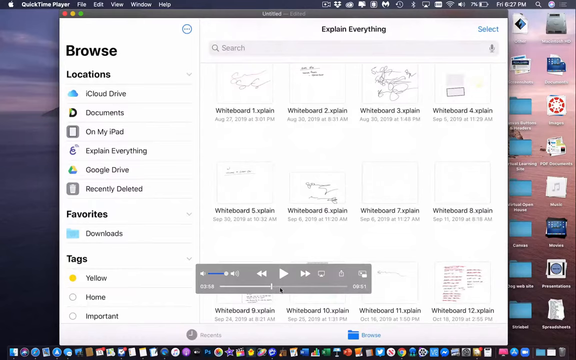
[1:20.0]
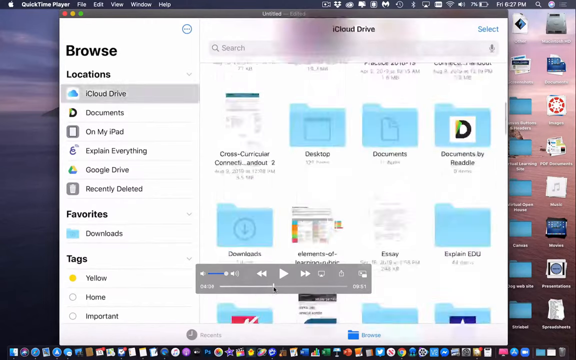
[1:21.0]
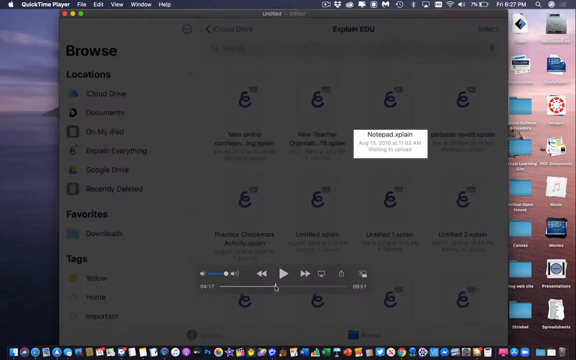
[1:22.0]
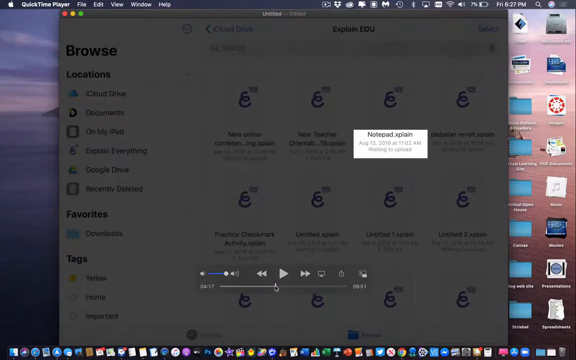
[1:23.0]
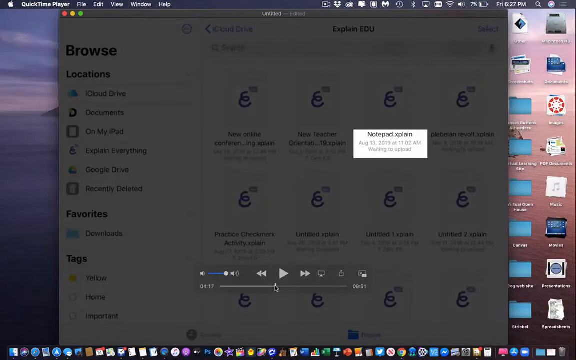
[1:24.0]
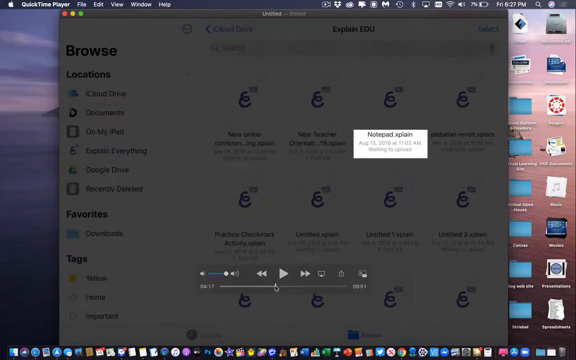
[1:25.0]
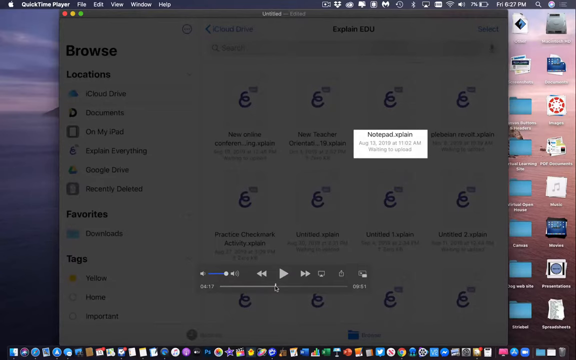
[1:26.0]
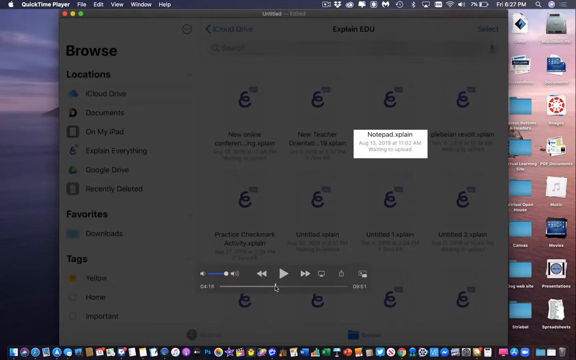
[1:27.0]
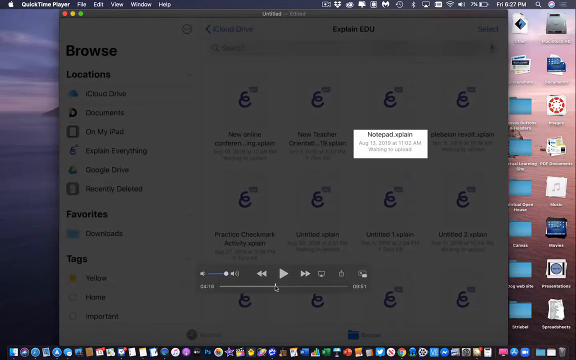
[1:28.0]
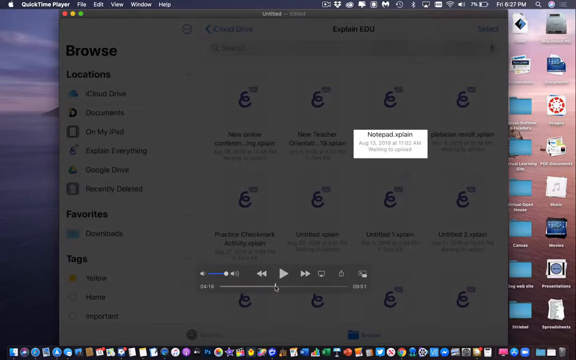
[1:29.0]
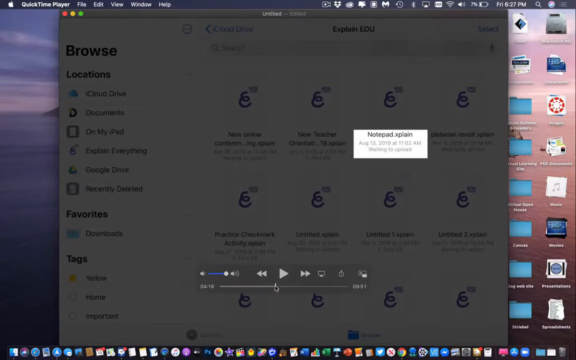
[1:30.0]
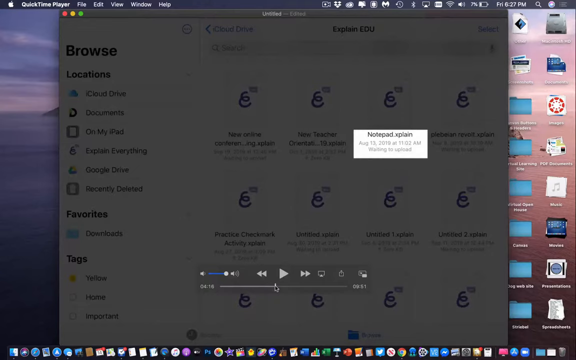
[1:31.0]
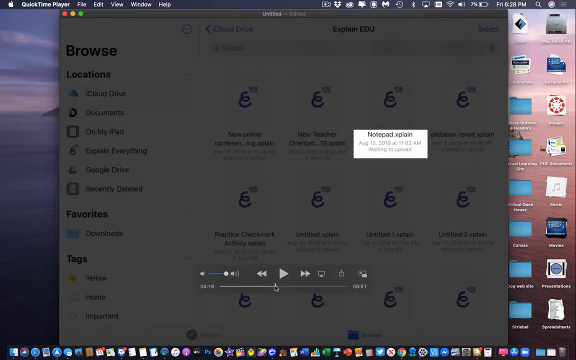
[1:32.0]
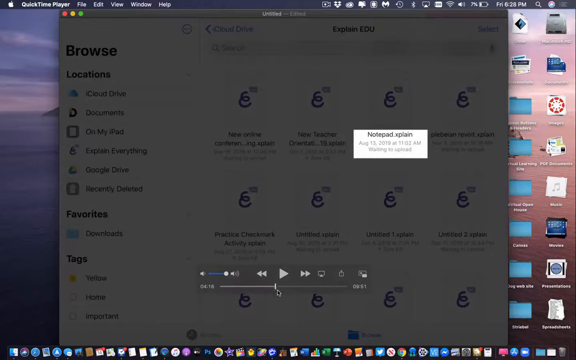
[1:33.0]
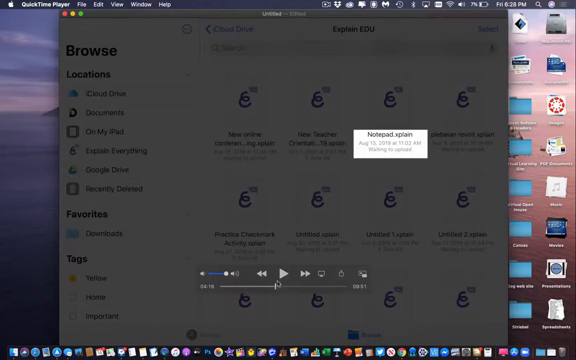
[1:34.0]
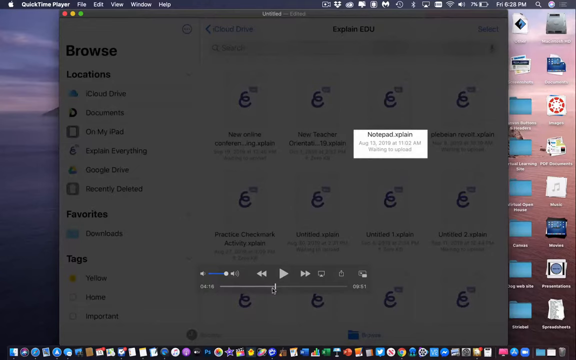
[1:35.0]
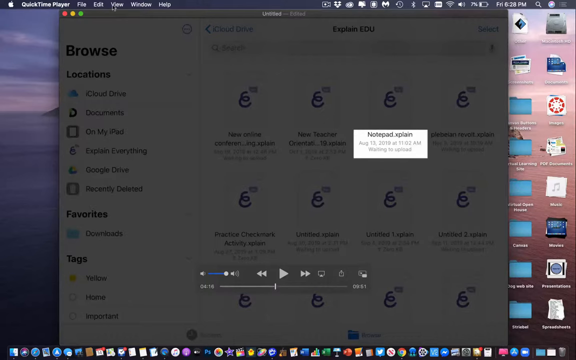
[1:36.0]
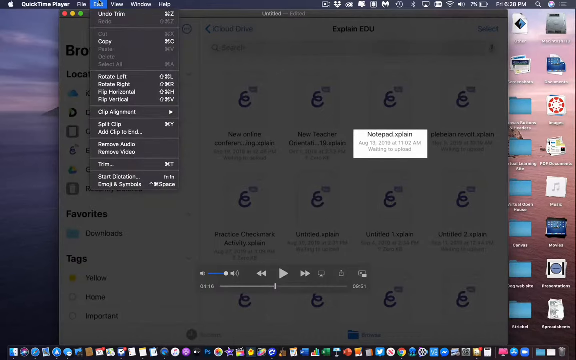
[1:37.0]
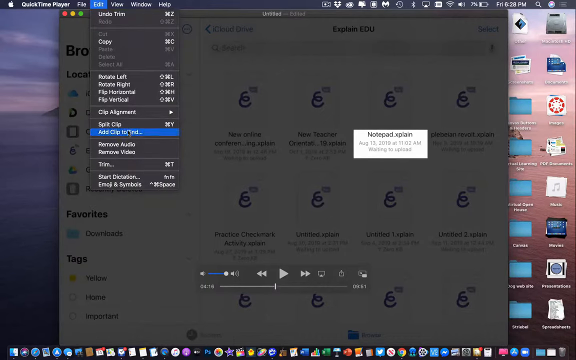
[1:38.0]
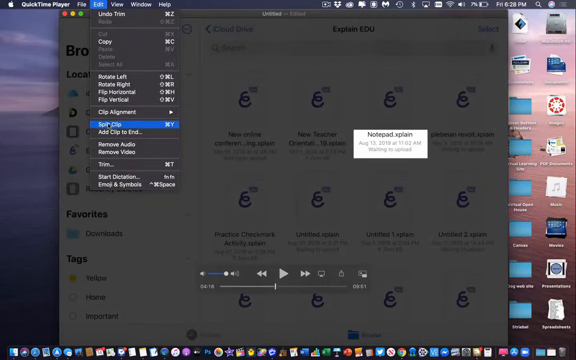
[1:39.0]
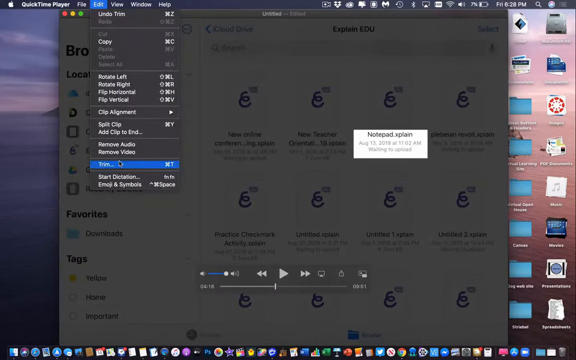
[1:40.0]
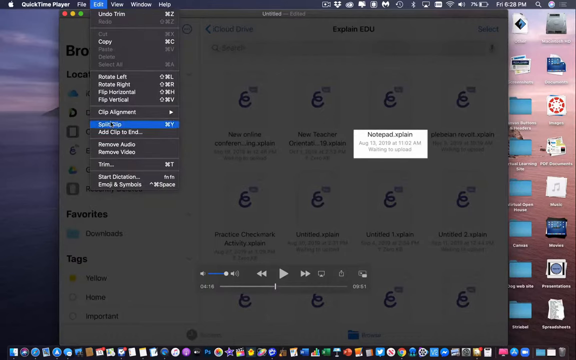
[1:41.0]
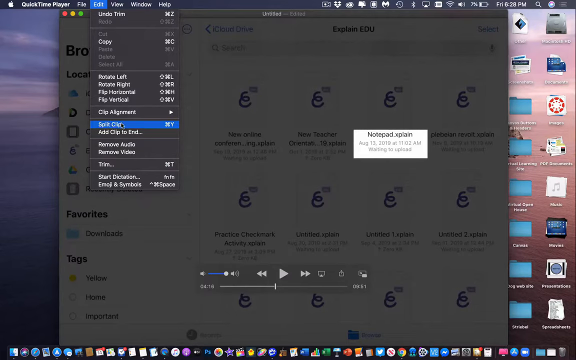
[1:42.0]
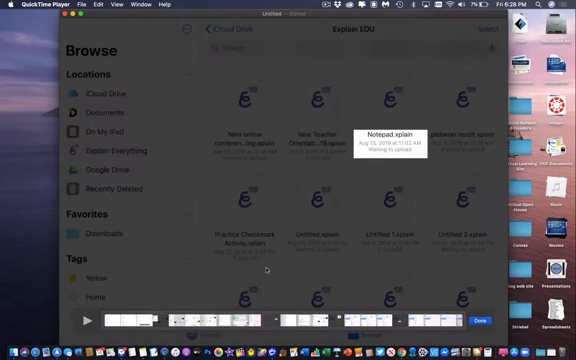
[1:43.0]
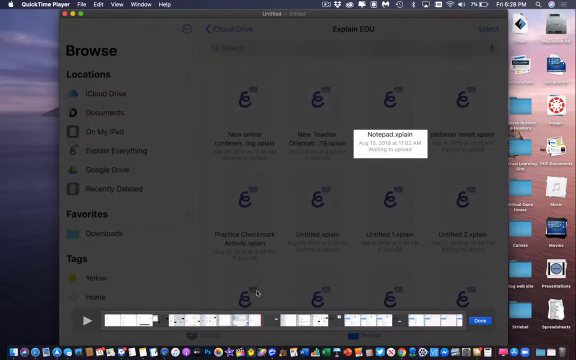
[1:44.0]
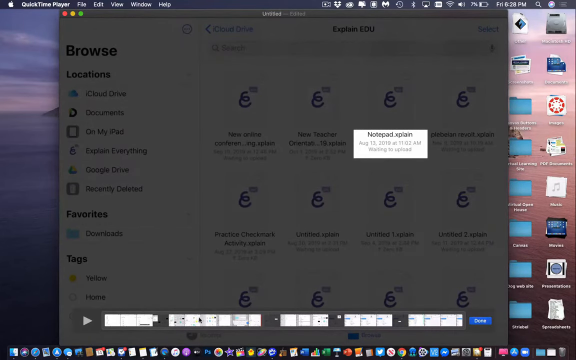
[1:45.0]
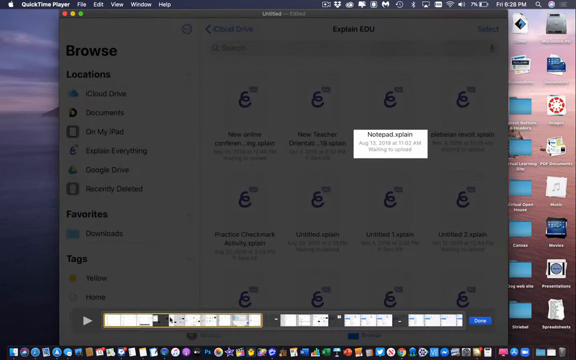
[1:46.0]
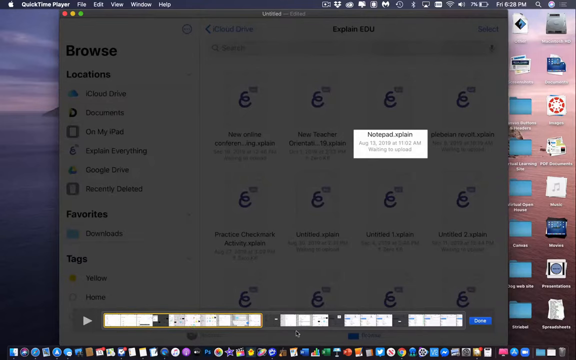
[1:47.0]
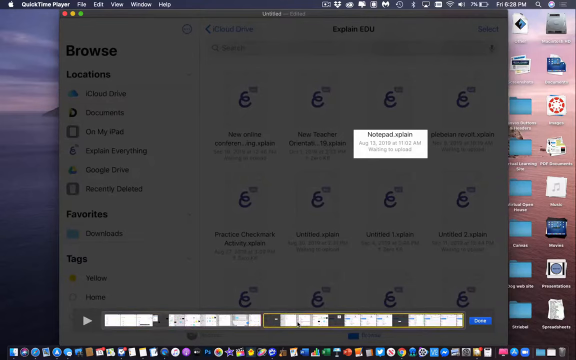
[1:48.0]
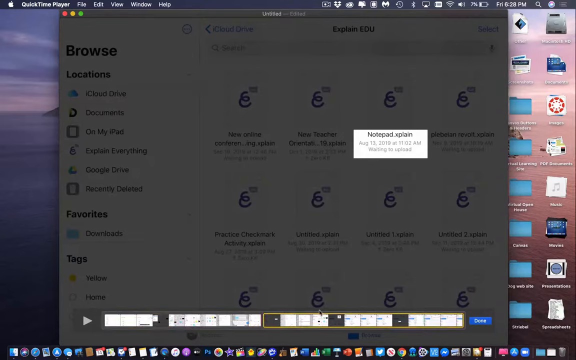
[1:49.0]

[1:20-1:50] A person is playing a video in QuickTime Player on an iPad, with a play bar at the bottom center of the screen. They move the play bar back and forth to show different timestamps in the video. The screen then goes dark and a white box appears that says "notepad.explainAugust13th2019 at 11.02am"; the rest is too blurry to read. This stays on the screen for a while, with the whole screen kind of darkened except for that one area. The mouse cursor then starts to move, with a little circle around the cursor where the play bar is, showing exactly where in the video the person stopped. The person moves up to the Edit menu at the top and down to the menu item "add clip to end," then up to "split clip" and highlights it, down to "trim" and highlights it, then back up to split clip. After moving back and forth, they click on split clip, and a bar appears. They move the cursor to the left and click on one piece of the video clip, put a circle around it, and then click on another part of the video clip on the right side.